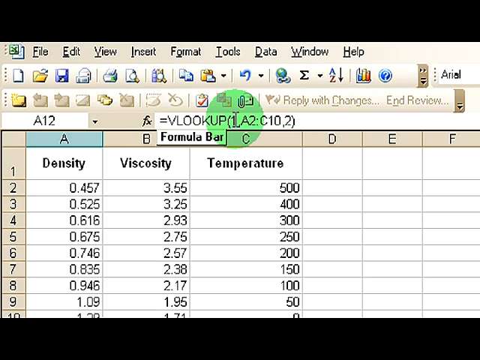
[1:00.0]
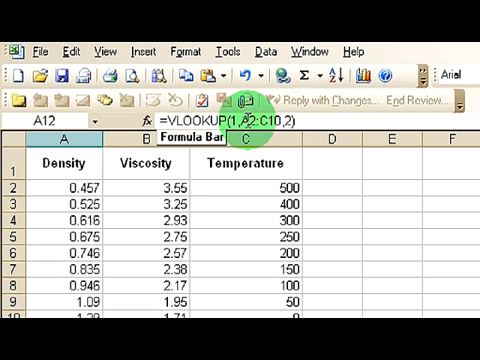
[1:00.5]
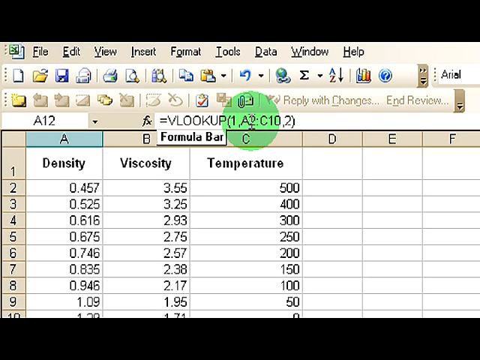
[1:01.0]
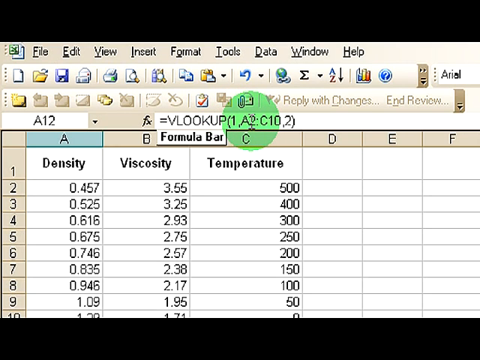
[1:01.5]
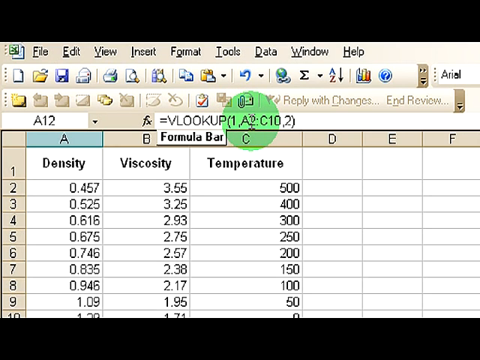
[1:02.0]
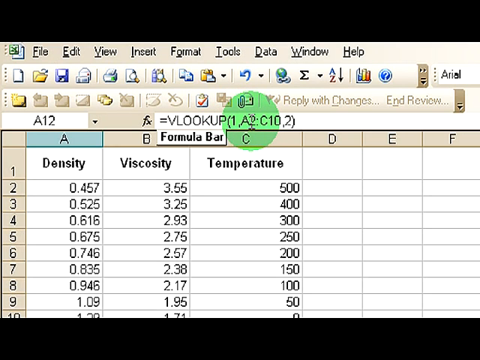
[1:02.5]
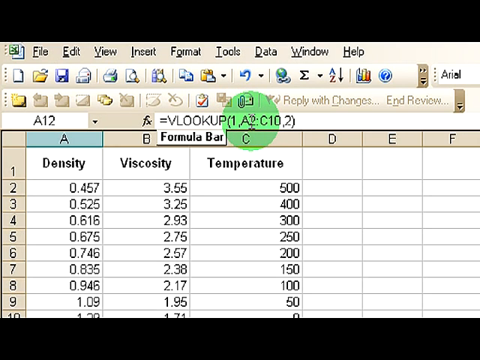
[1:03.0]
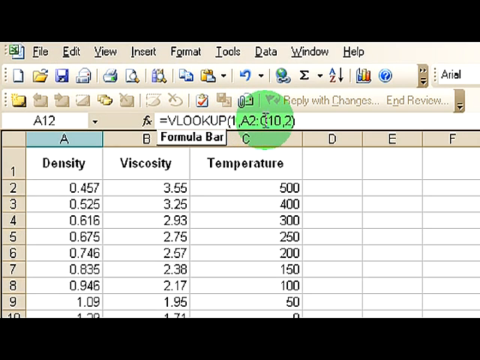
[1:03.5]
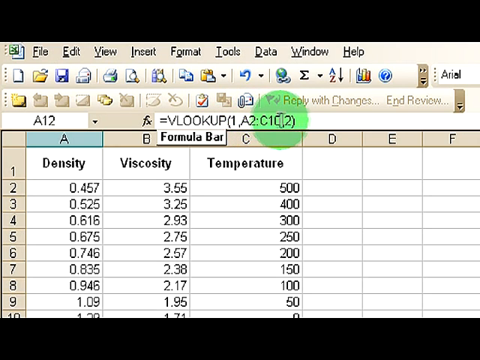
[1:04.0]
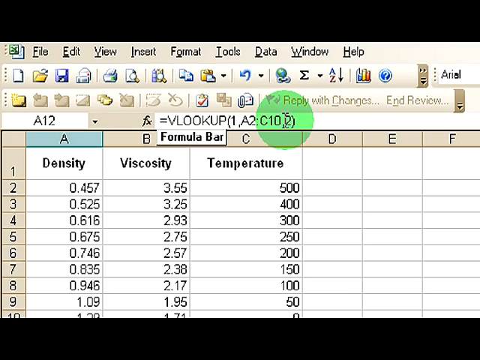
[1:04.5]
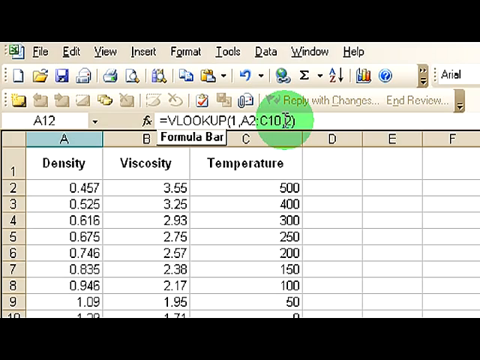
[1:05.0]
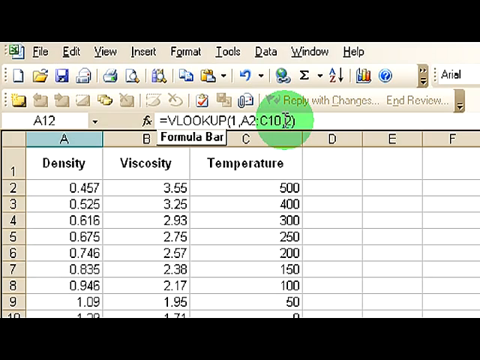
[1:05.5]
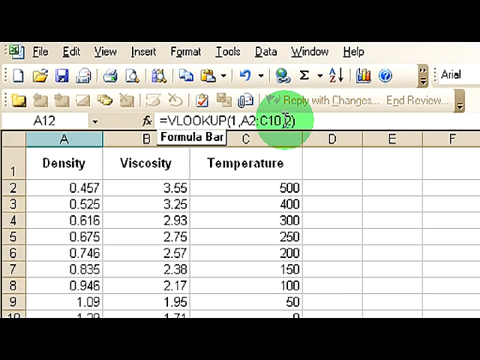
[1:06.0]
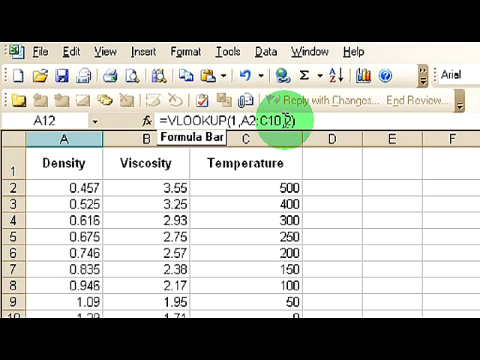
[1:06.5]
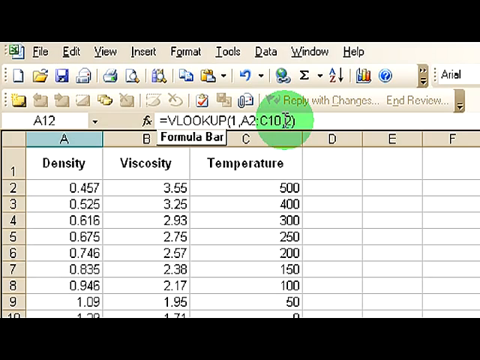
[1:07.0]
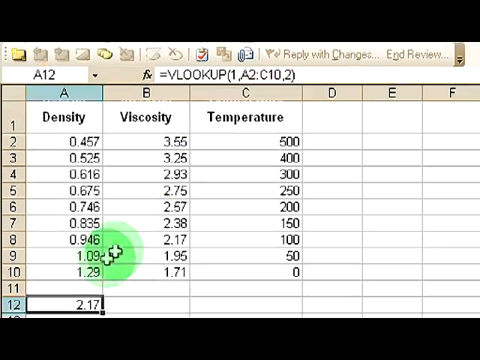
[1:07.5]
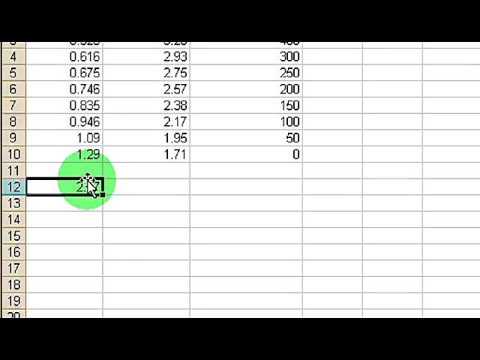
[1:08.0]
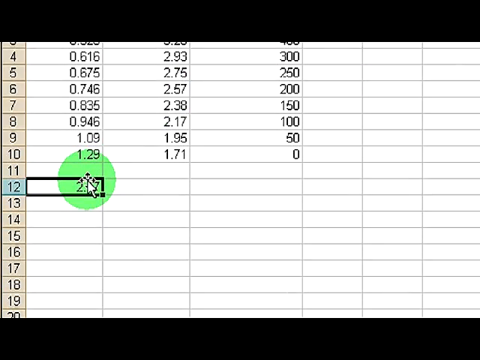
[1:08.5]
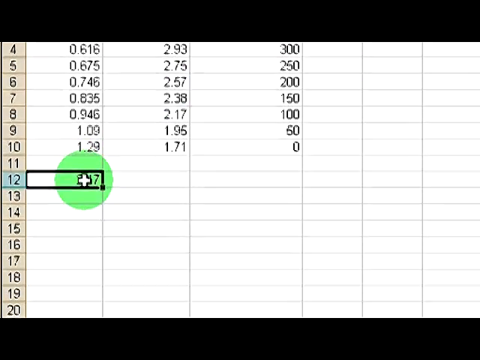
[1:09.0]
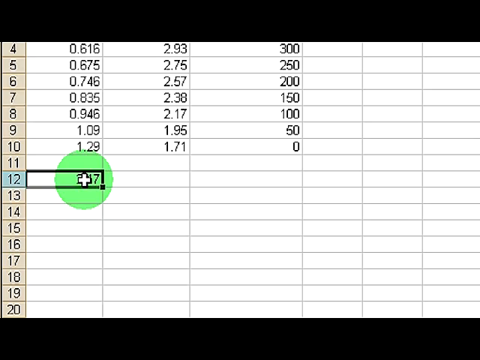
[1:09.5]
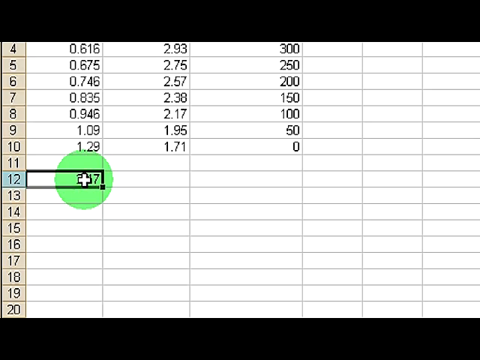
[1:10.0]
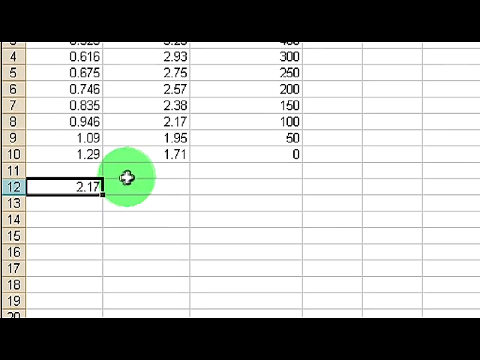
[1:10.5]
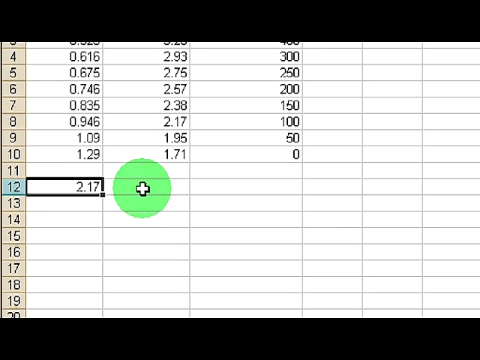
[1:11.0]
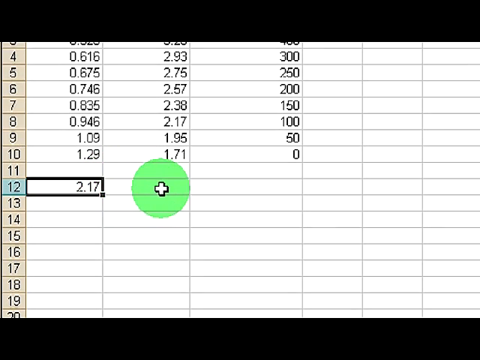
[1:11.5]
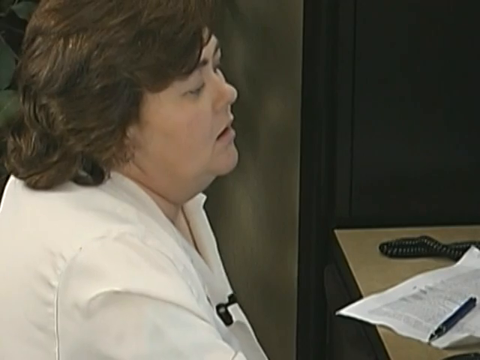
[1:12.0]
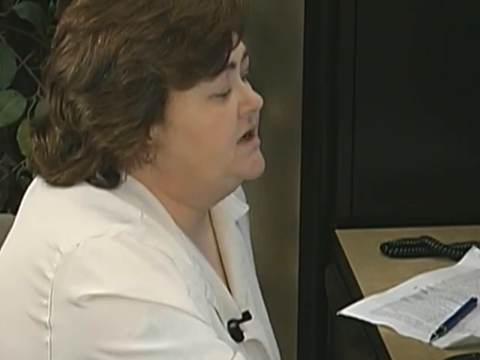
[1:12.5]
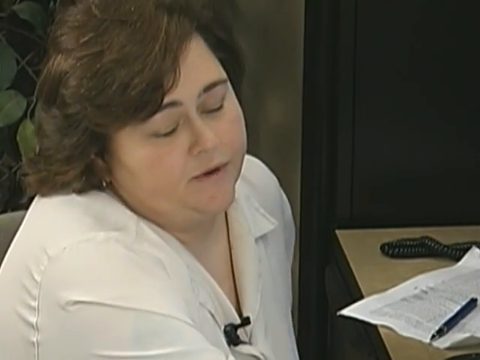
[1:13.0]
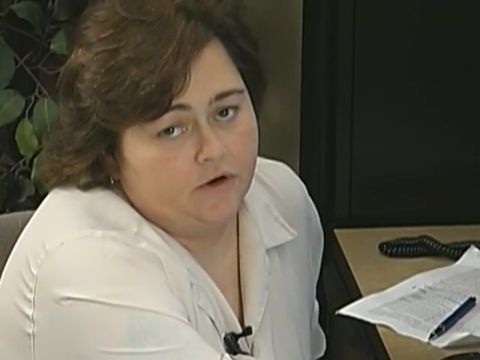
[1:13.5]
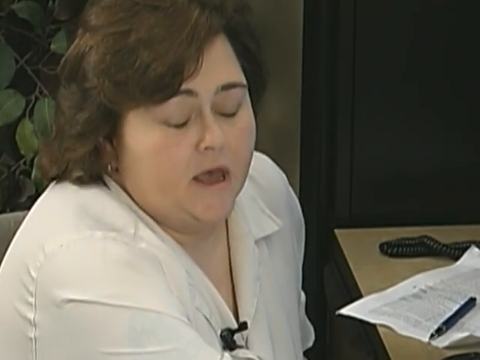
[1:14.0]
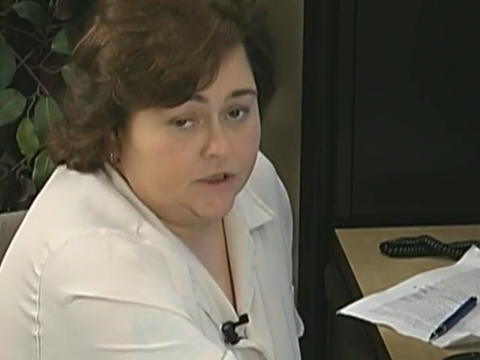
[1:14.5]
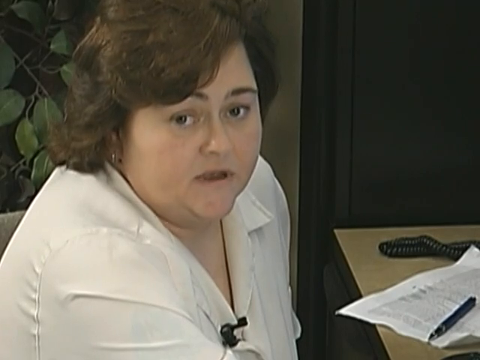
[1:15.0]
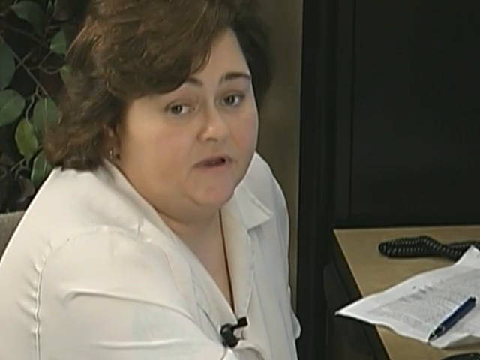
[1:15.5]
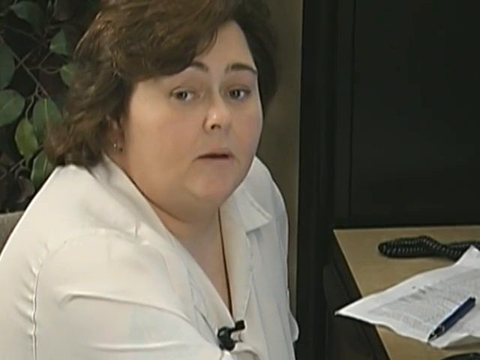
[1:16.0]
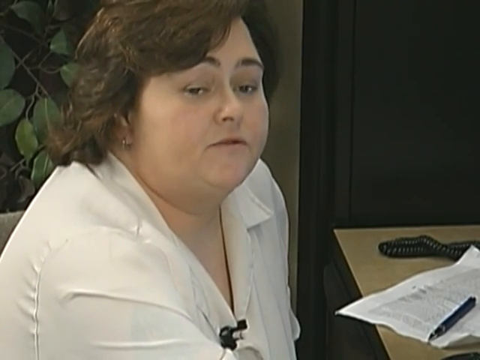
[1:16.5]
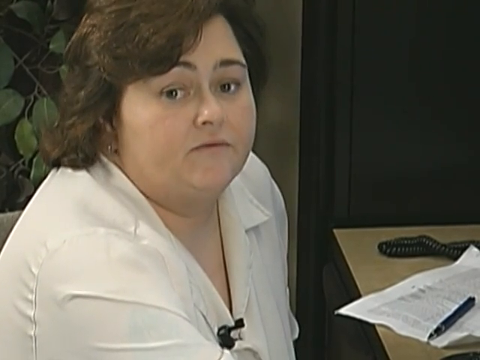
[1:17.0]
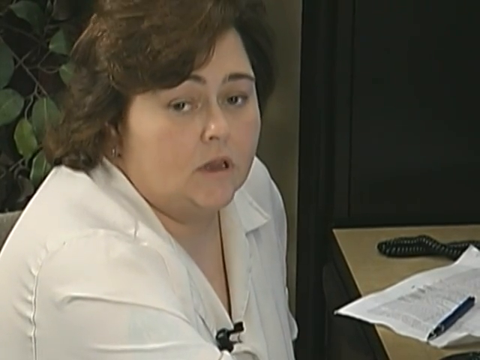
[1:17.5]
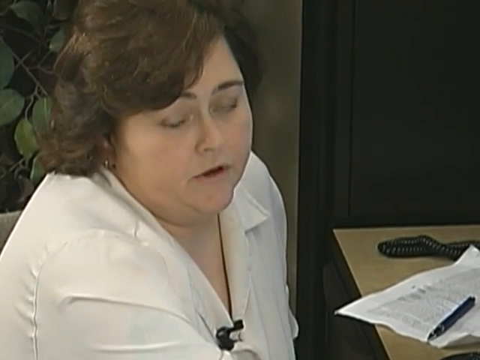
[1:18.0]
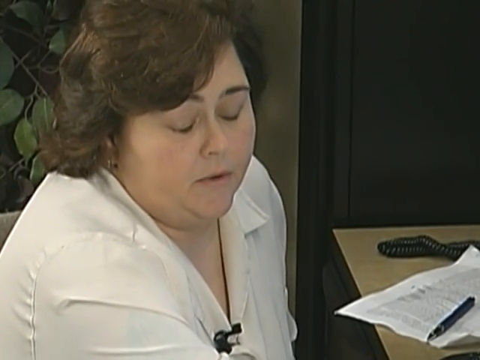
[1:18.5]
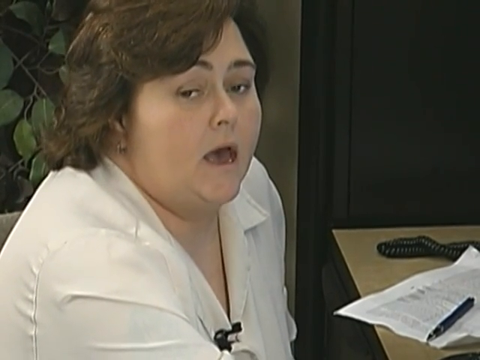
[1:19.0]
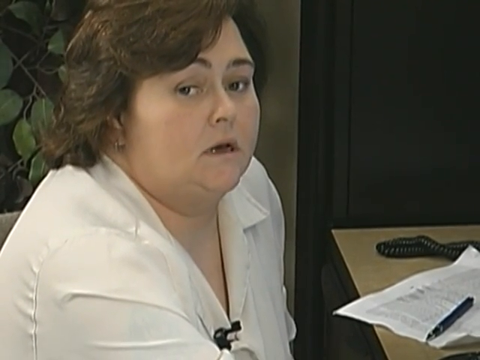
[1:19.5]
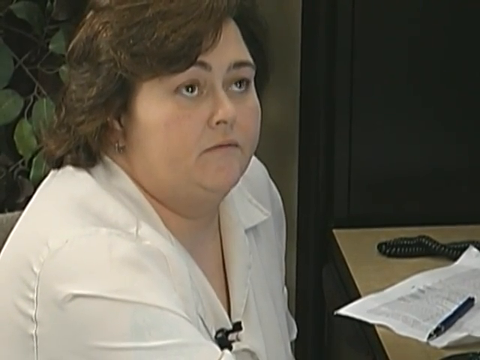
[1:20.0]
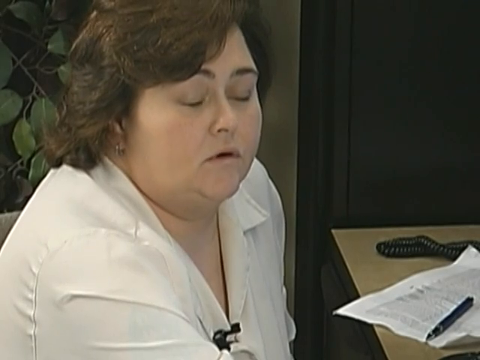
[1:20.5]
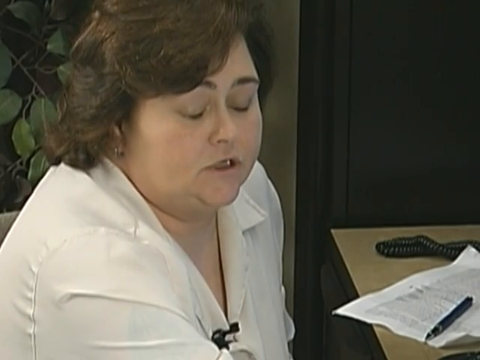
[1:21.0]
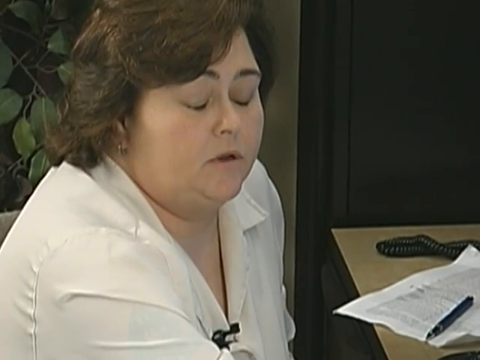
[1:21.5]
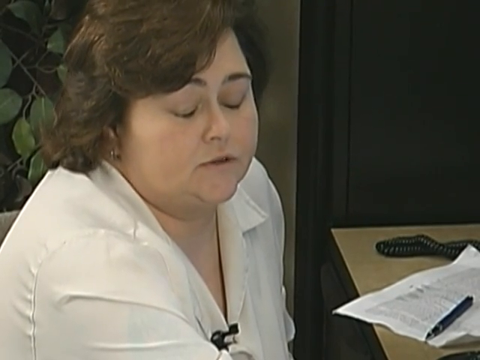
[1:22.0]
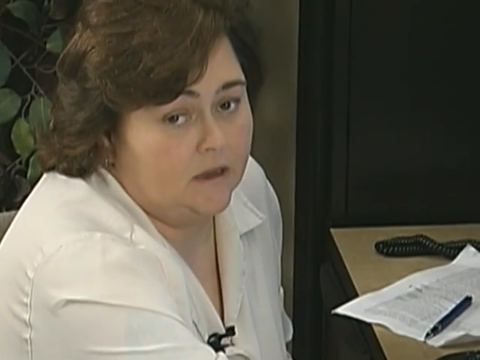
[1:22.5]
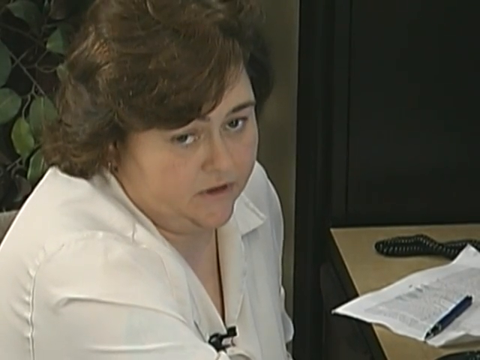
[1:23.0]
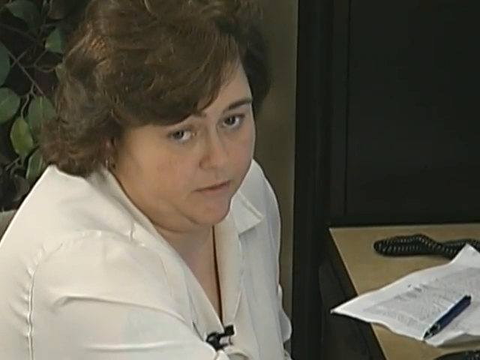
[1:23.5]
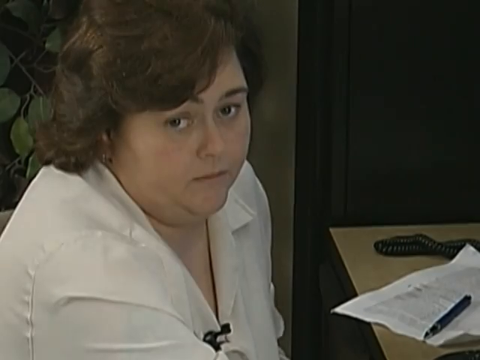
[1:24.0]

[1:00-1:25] She is still talking about the VLOOKUP function in Excel, going through the cells in columns A, B and C. In what appears to be row 12, maybe cell A12, she writes the VLOOKUP function and then explains how it works. A piece of paper is on her computer desk in front of the monitor. Finally she finishes, turns completely to the camera and ends her lecture.